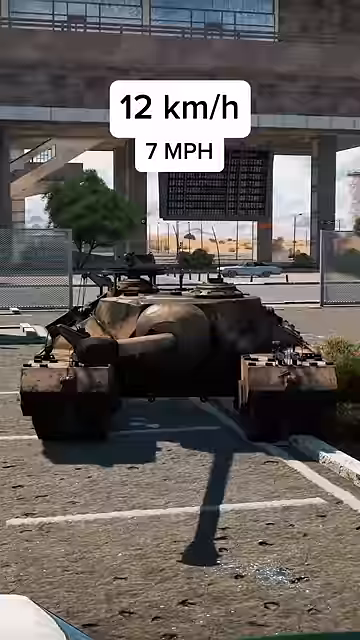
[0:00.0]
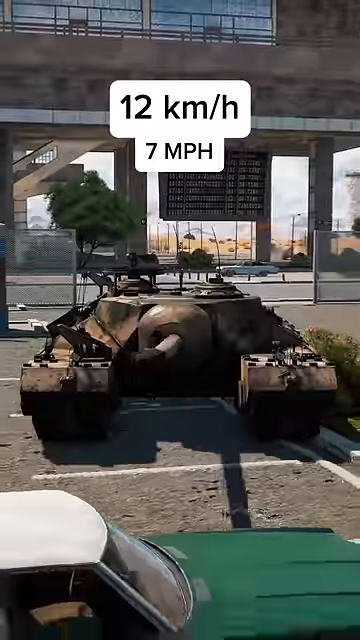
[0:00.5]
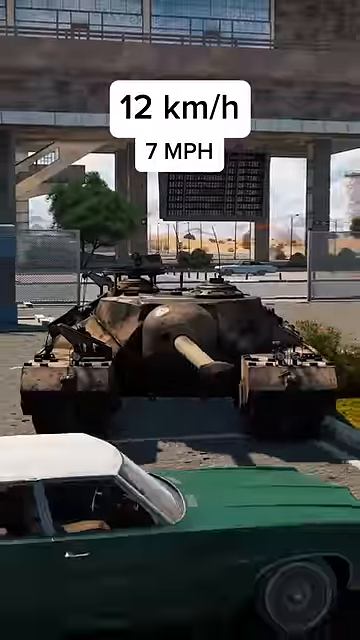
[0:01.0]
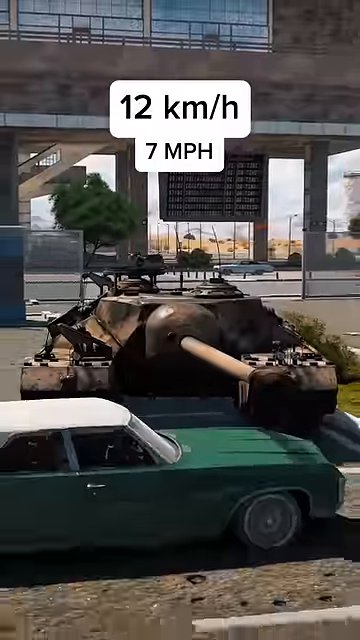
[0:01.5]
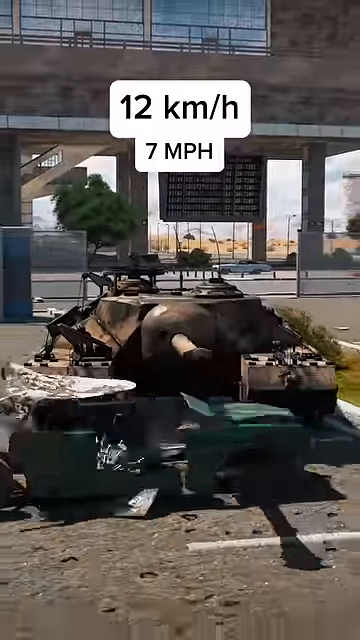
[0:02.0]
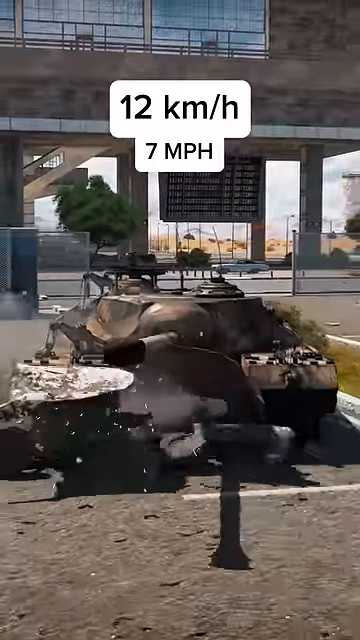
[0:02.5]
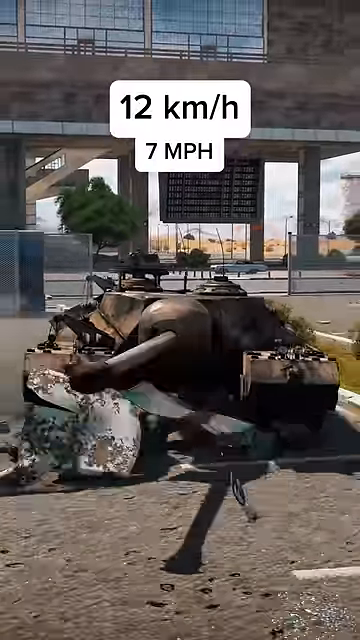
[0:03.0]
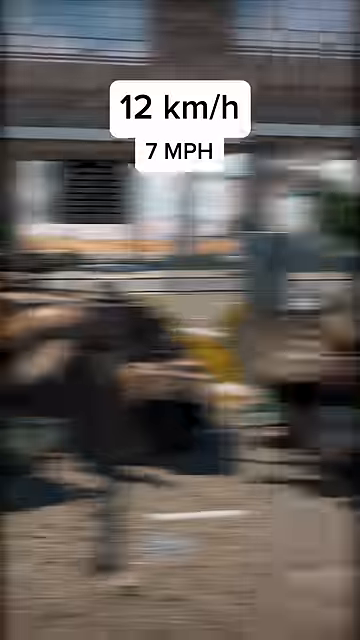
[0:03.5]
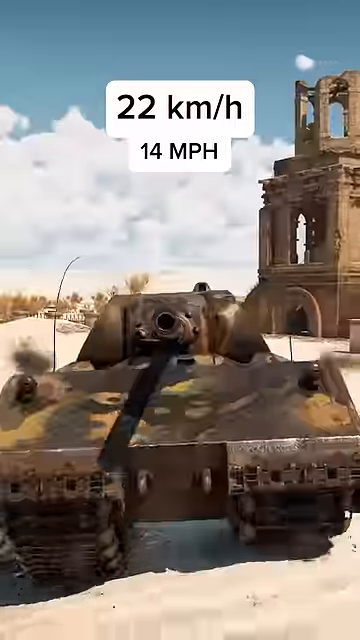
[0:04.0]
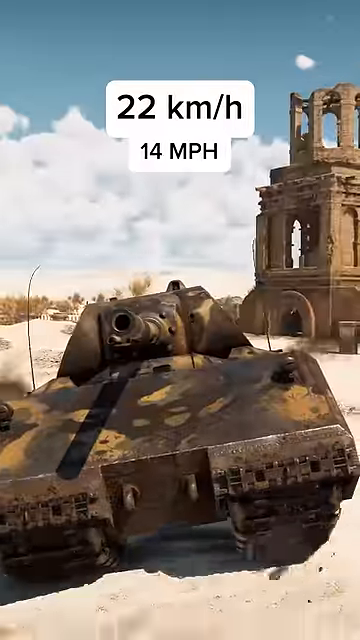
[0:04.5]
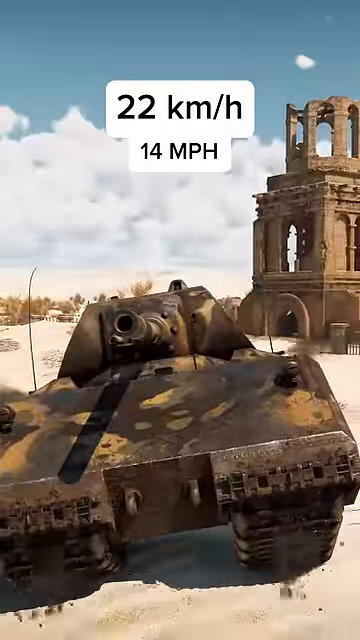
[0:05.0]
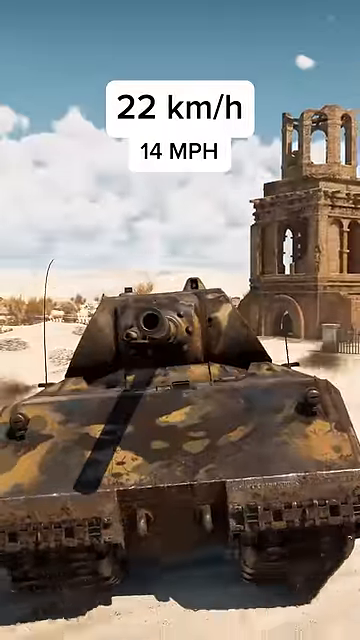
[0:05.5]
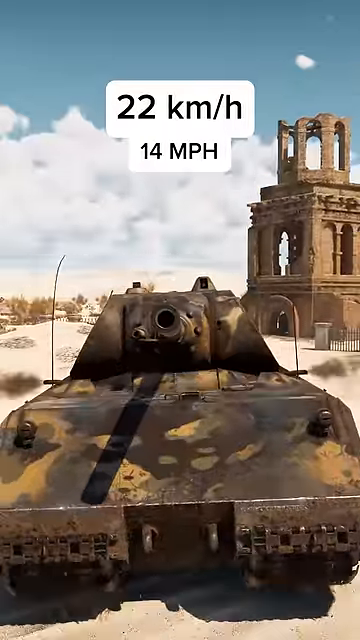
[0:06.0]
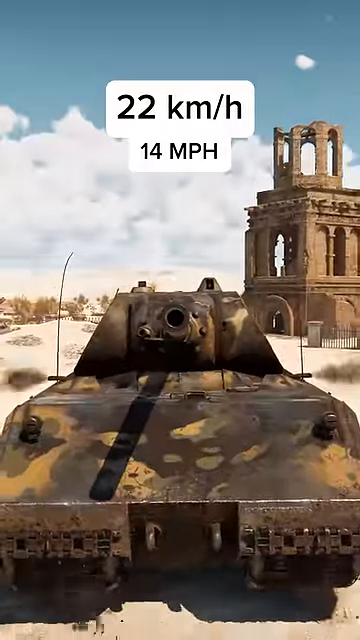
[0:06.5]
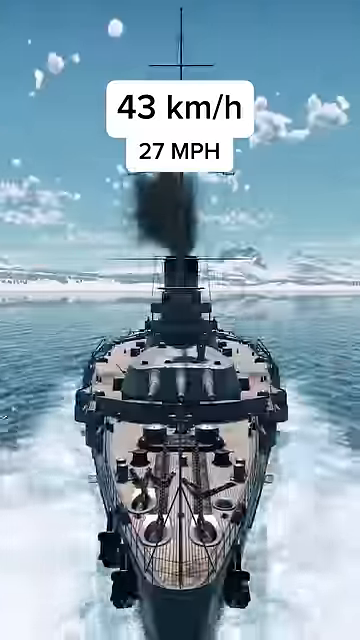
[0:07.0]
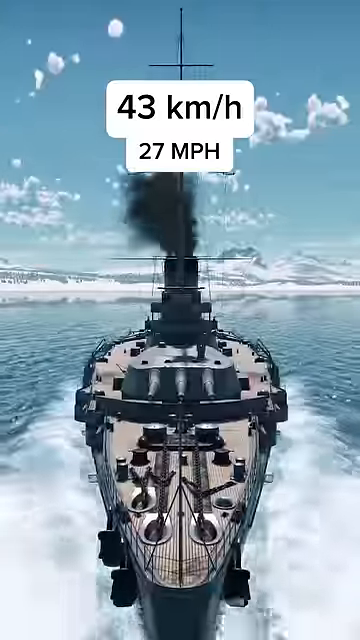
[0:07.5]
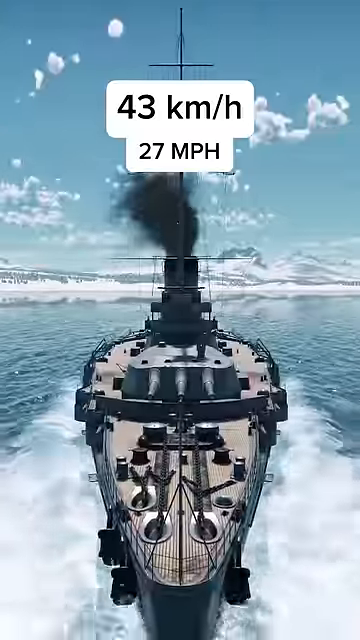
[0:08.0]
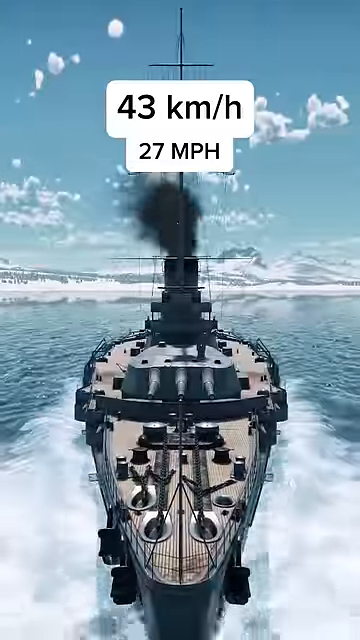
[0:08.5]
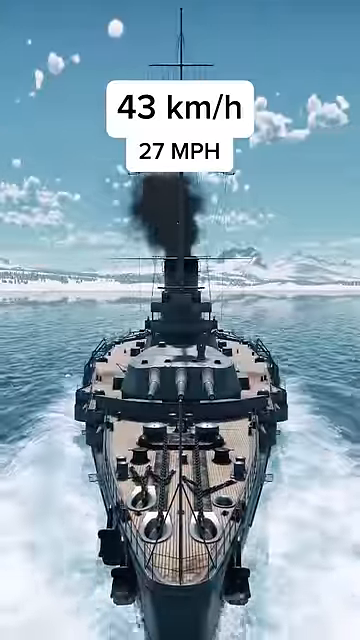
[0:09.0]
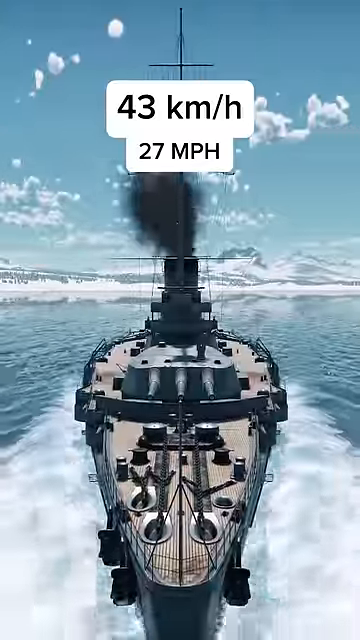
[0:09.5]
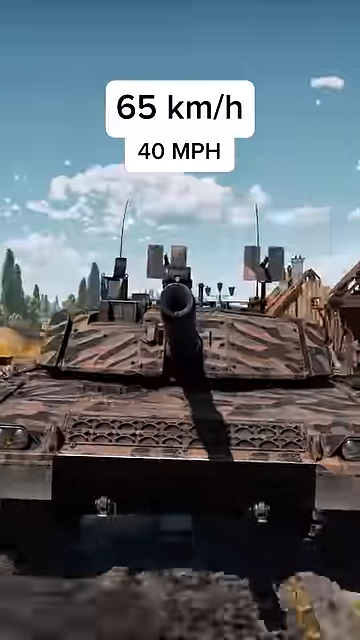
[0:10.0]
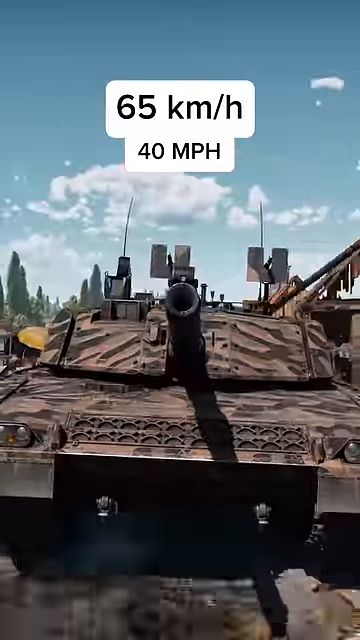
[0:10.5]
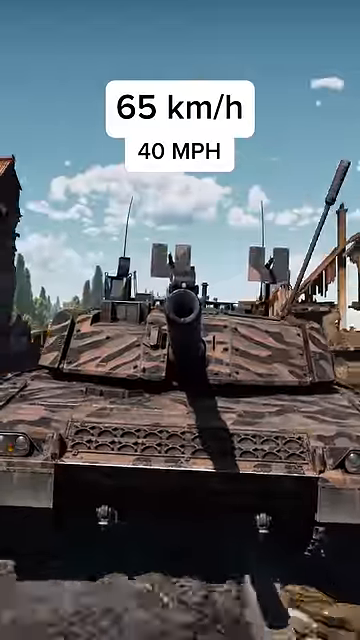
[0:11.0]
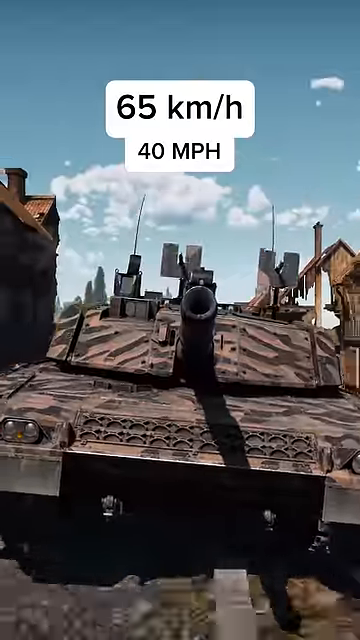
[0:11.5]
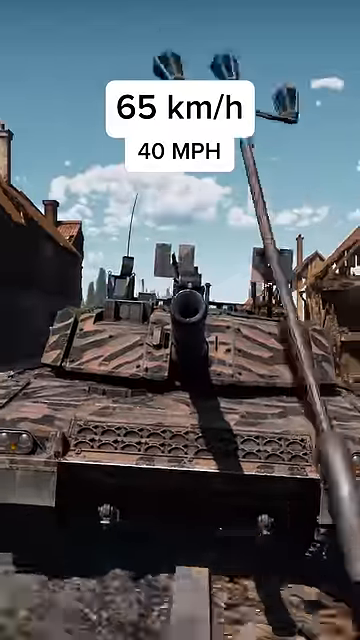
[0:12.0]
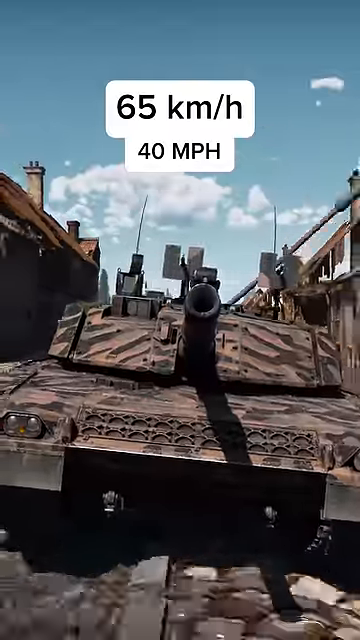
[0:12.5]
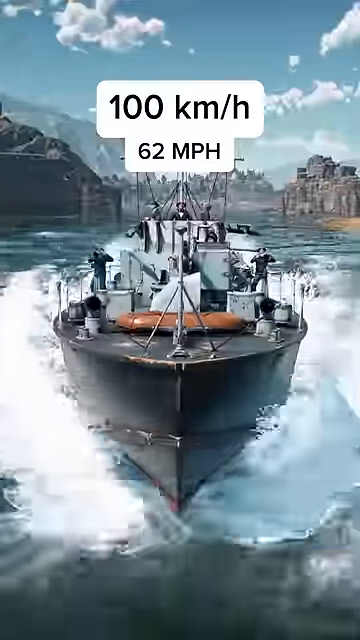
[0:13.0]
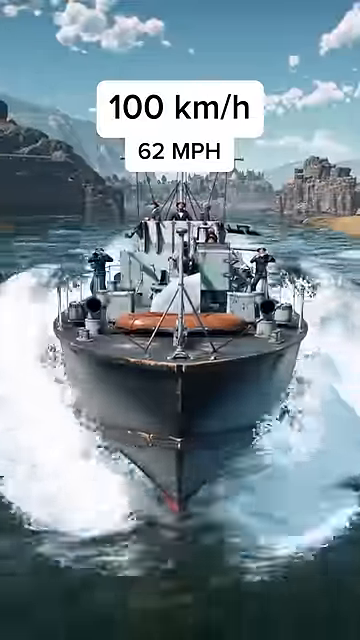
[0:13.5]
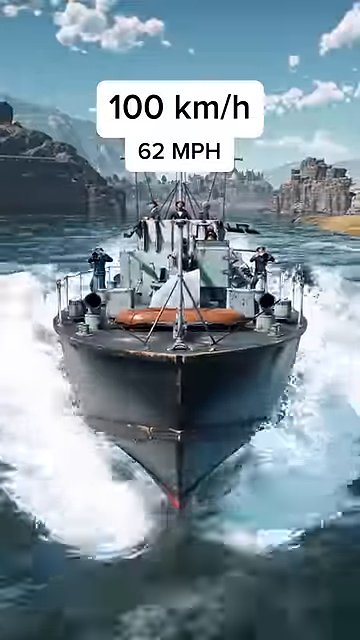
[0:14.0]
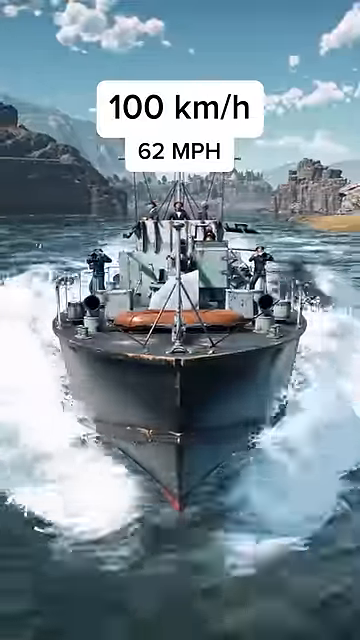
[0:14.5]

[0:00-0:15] Vehicles from War Thunder are shown one after another, including tanks and ships, with each one's speed listed in kilometers per hour and then in miles per hour. The background changes from one scene to the next: the ships are out on the sea, while the tanks appear in desert and urban areas. The first is a tank in an urban area, moving at 7 miles per hour, 12 kilometers per hour, and crushing over a green car. The second is another tank, more of a leopard-painted tank, doing 22 kilometers per hour or 14 miles per hour in a sandy area with some ruins behind it. Next comes a ship out on the water, moving a little faster than the tanks at 43 kilometers per hour or 27 miles per hour. Another tank then cruises along through a downtown area, taking out power poles and light poles as it goes, at 65 kilometers per hour or 40 miles per hour. The last is a ship really throwing up the water as it goes, at 100 kilometers per hour, 62 miles per hour.